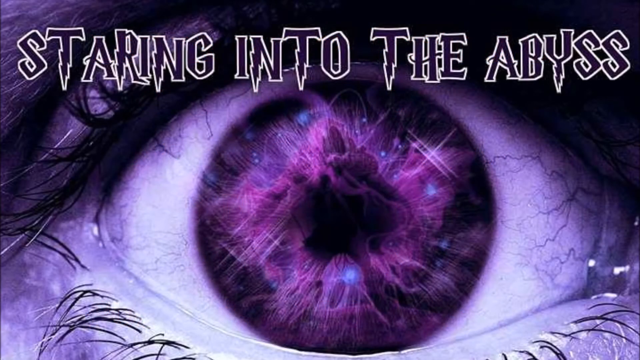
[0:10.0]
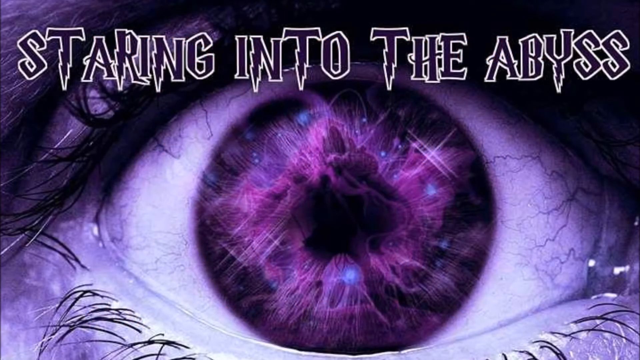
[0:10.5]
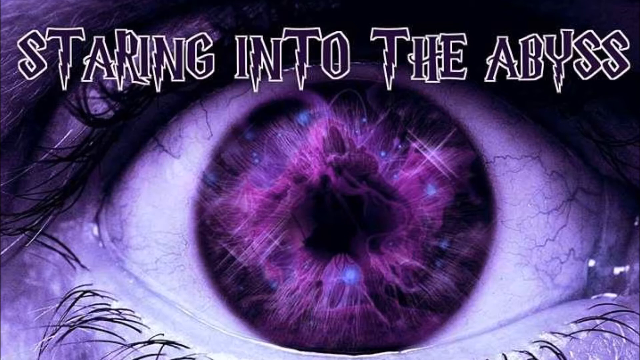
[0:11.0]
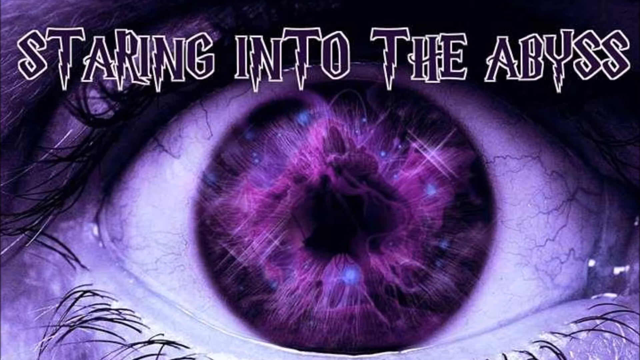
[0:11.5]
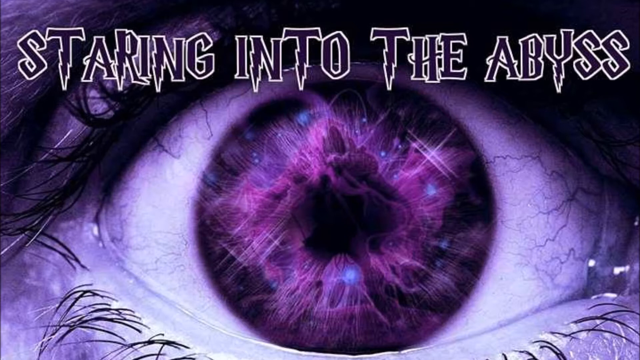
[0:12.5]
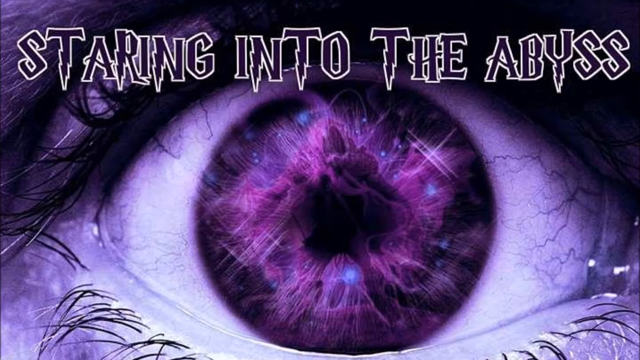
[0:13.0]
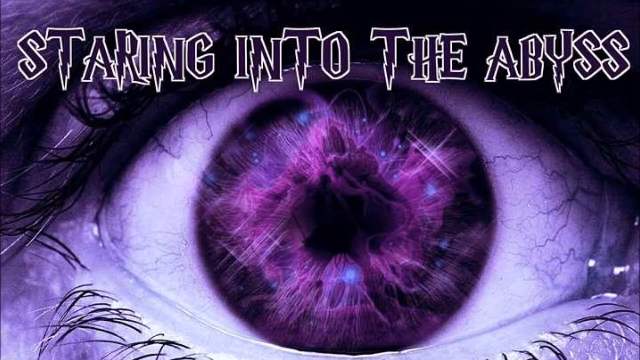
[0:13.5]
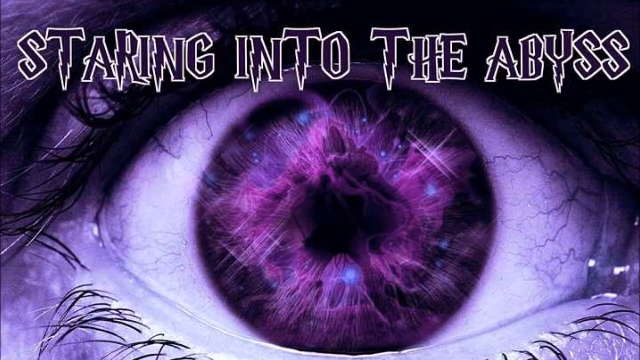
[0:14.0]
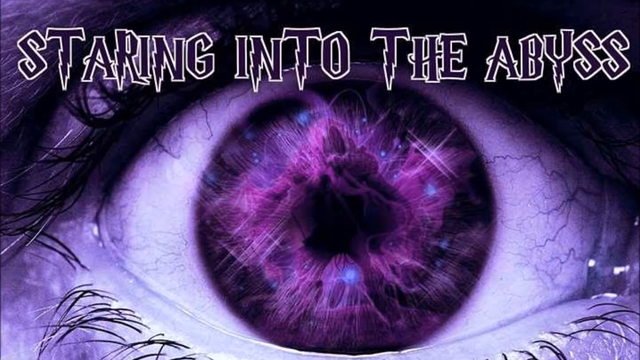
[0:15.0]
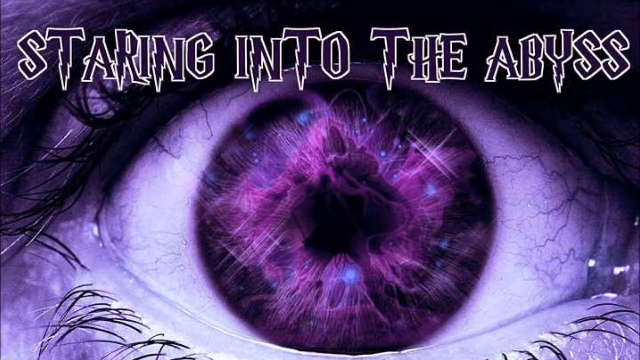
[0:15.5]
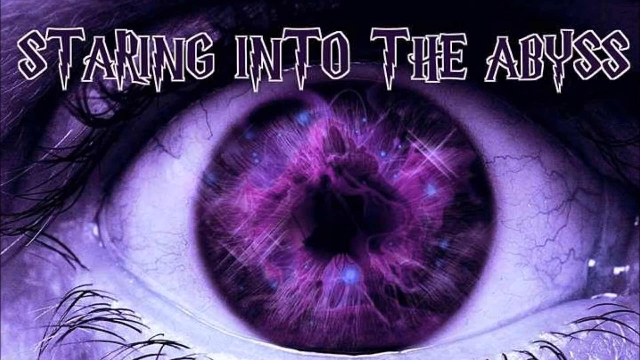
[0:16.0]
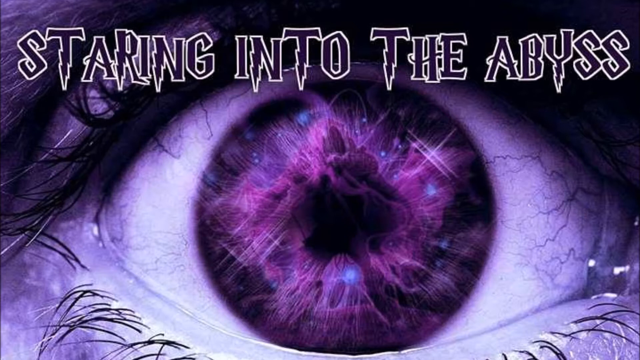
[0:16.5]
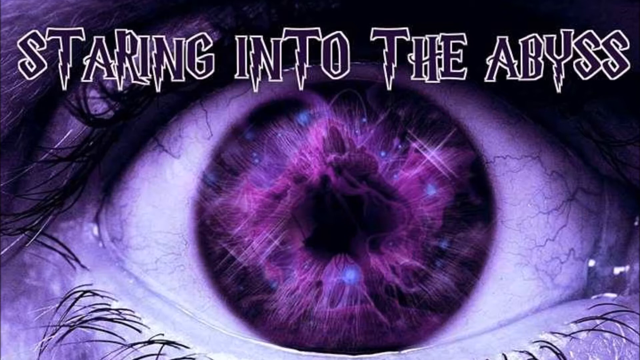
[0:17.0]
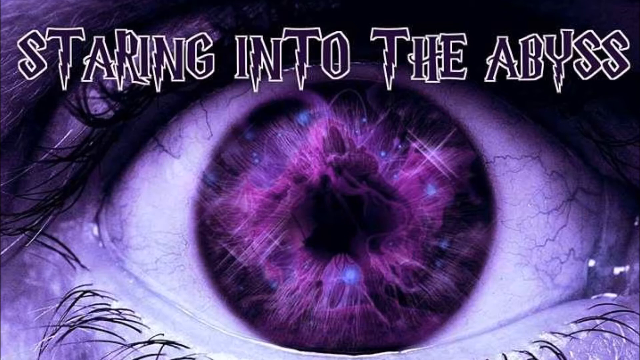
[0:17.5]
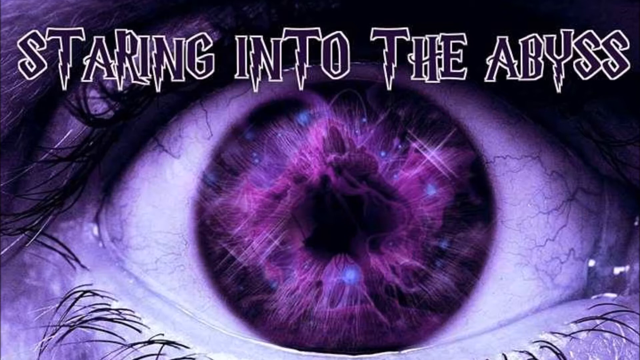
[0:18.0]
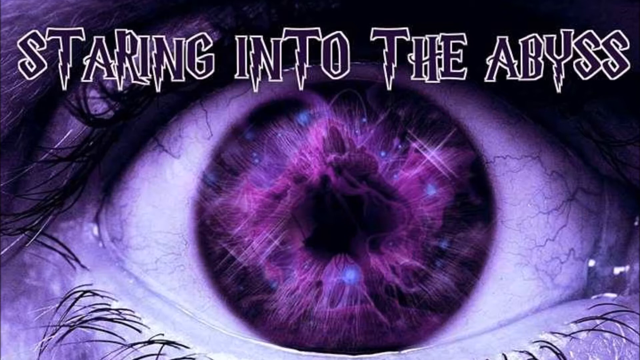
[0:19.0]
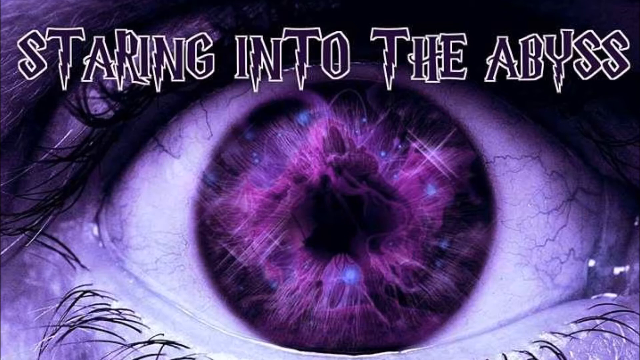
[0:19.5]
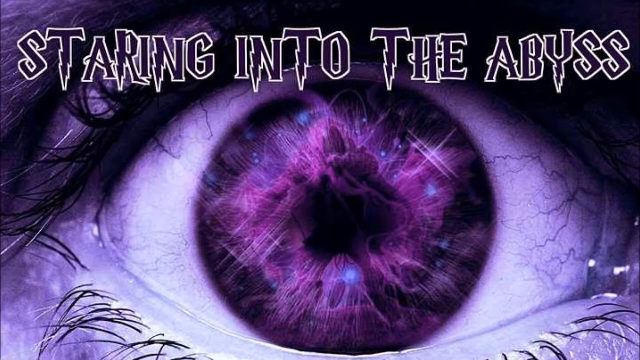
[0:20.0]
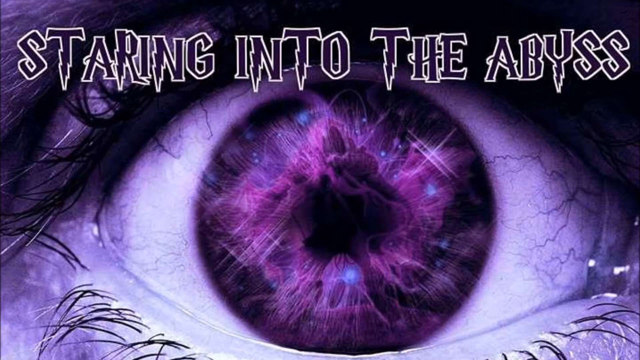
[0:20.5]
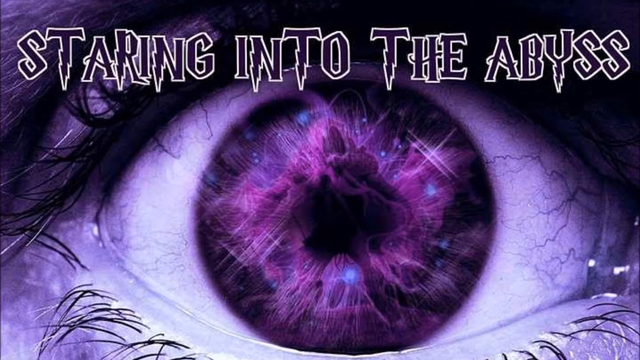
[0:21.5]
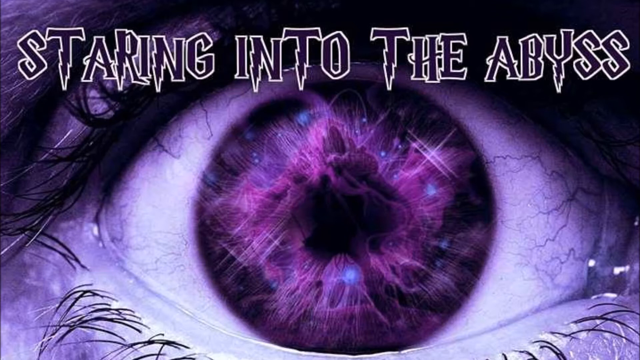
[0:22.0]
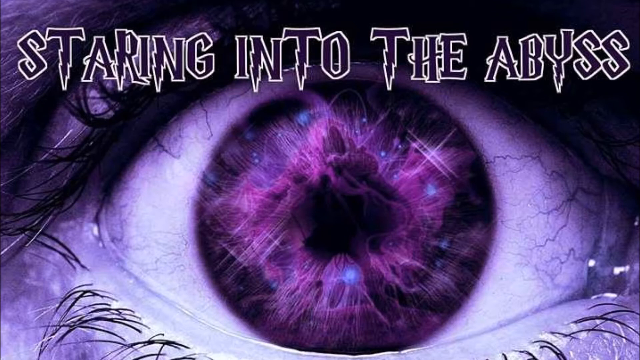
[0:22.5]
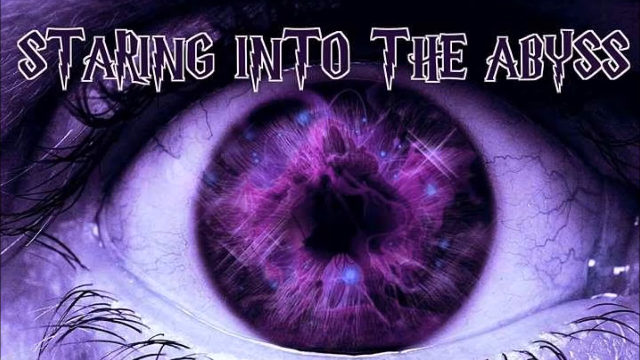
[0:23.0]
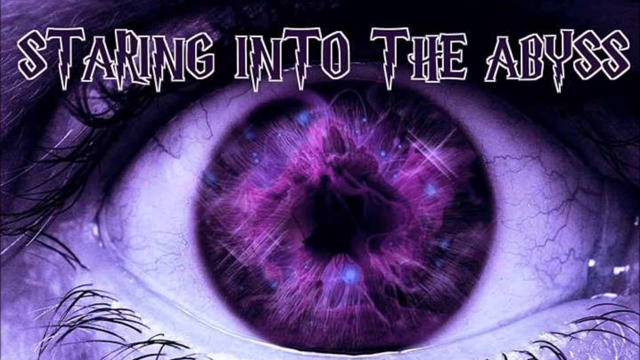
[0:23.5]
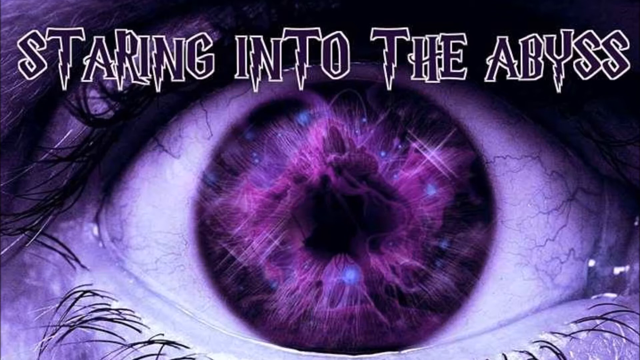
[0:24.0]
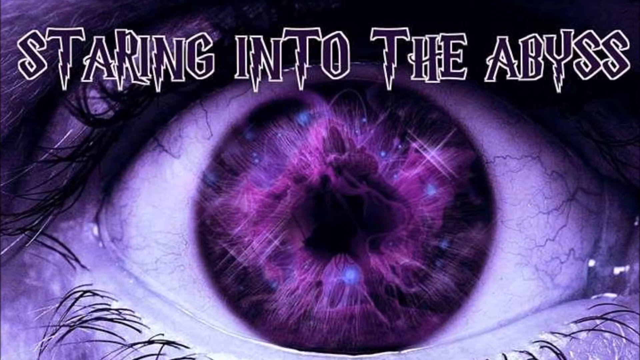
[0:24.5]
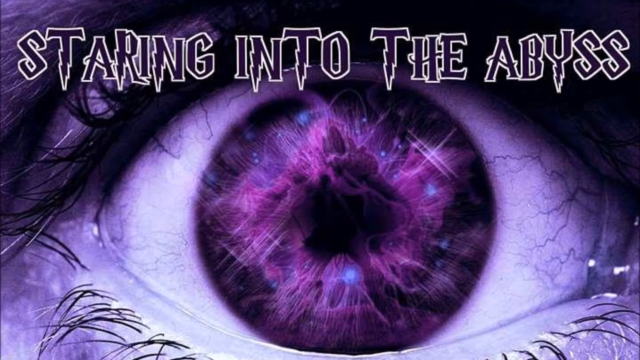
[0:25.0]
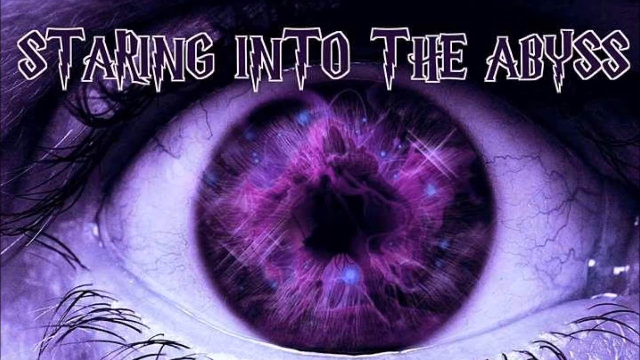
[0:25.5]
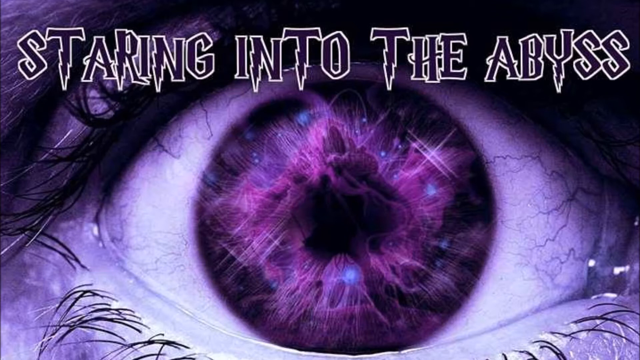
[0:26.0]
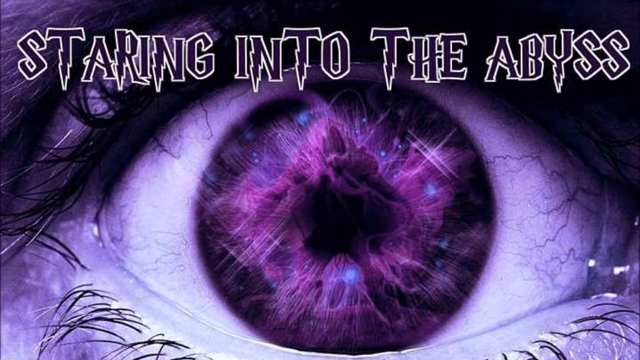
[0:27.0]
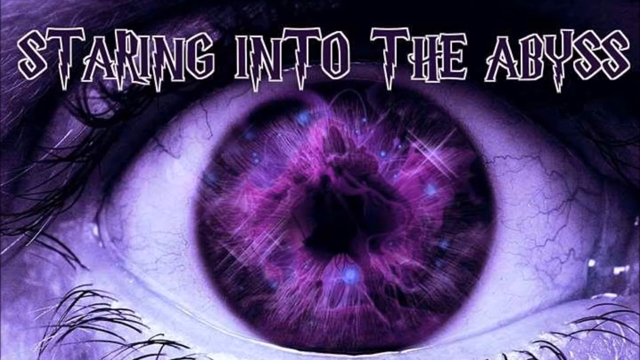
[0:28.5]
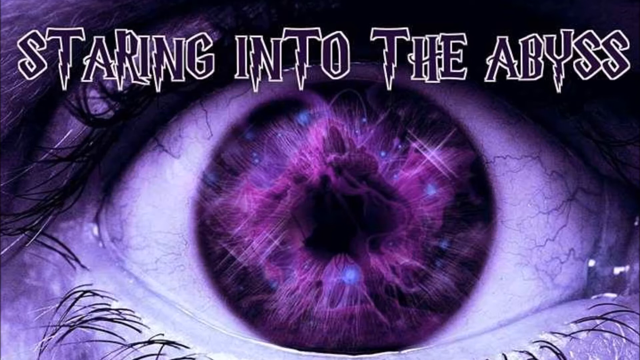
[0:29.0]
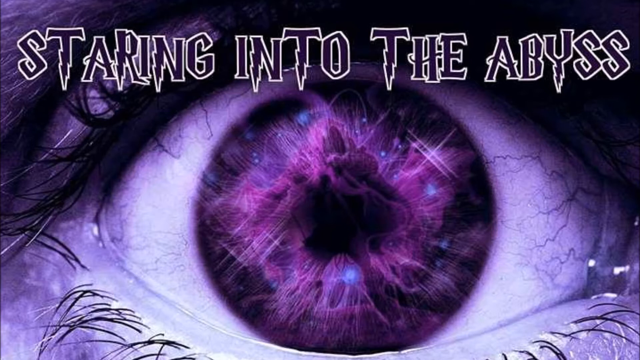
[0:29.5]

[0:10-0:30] The purple eye appears to be looking at something that looks like it is from the galaxy. The white of the eyeball is then visible, and then it changes to nothing. The eyes have black eyebrows. The text "staring into the abyss" is in a purple font with a very unusual style: some letters have lightning in them, the H has odd curved lines, and the letters R and N also have a lightning symbol. Inside the eye there is a purple monster from a galaxy and blue spheres, surrounded by purple clouds and the blackness of the galaxy. The shot ends on the same picture.